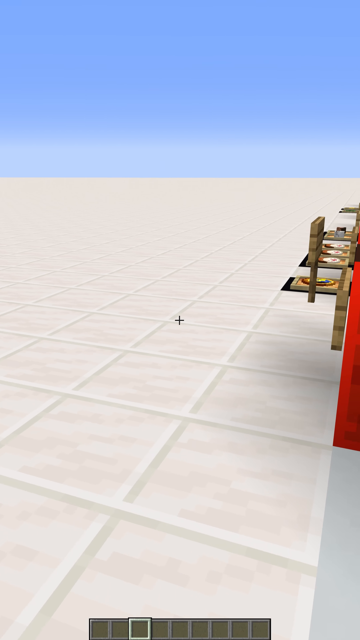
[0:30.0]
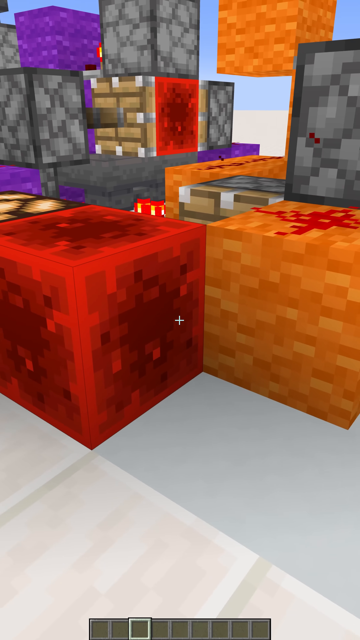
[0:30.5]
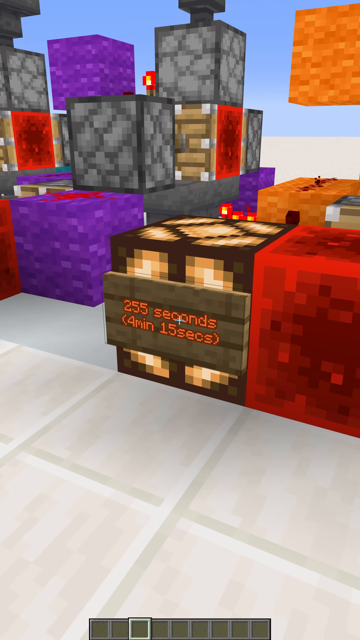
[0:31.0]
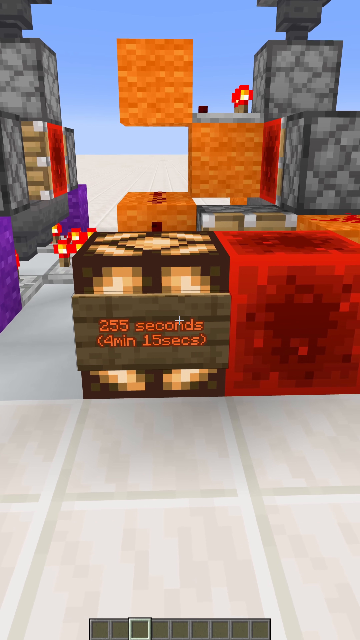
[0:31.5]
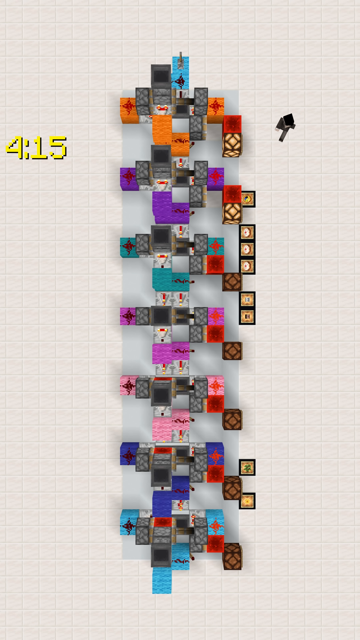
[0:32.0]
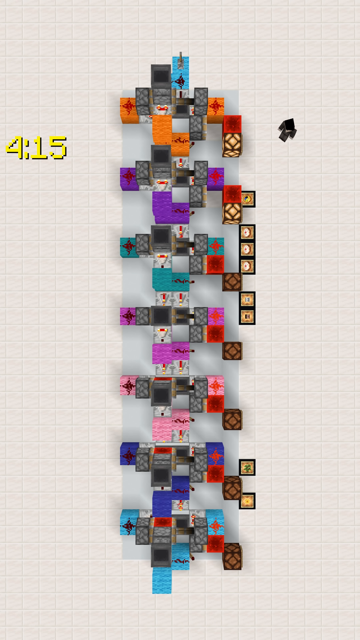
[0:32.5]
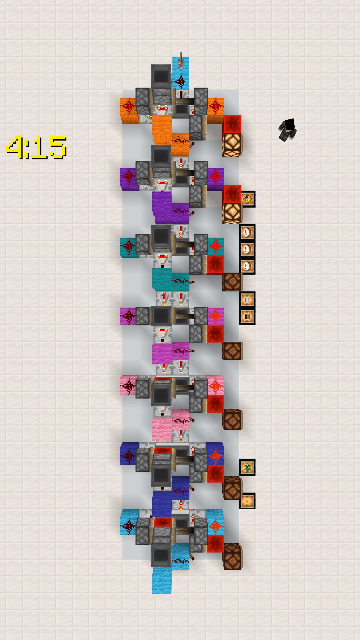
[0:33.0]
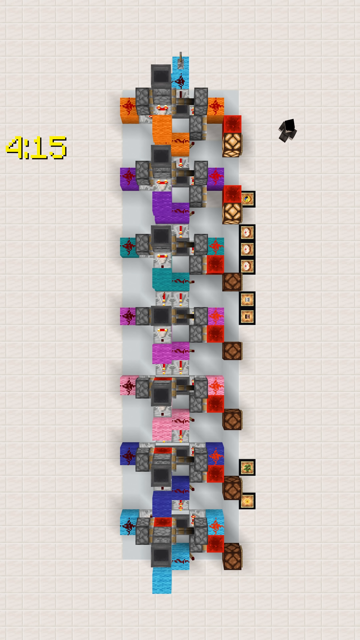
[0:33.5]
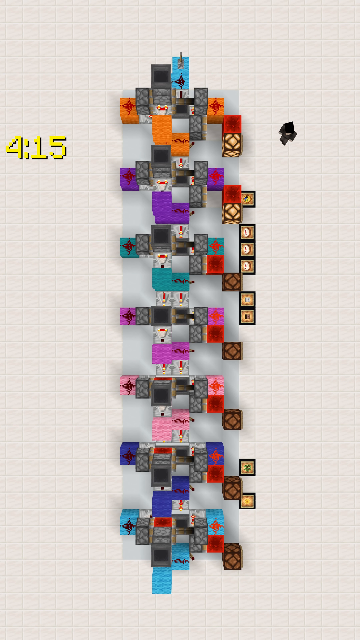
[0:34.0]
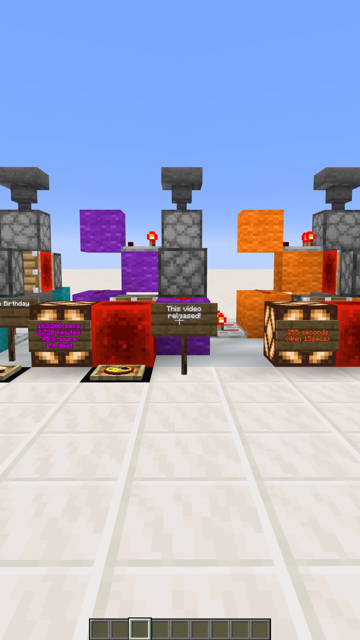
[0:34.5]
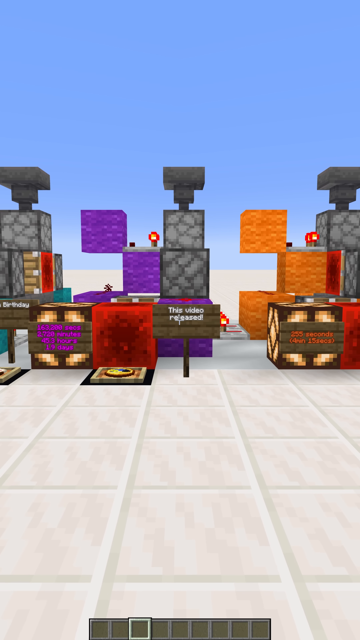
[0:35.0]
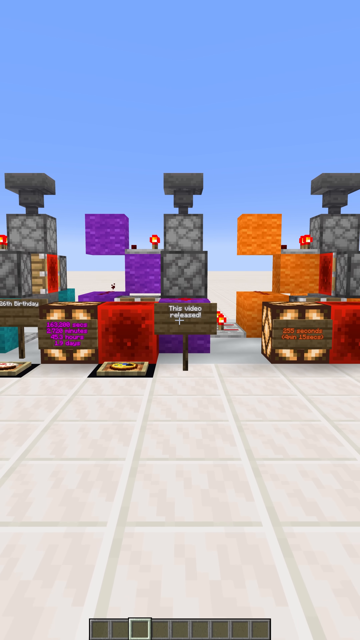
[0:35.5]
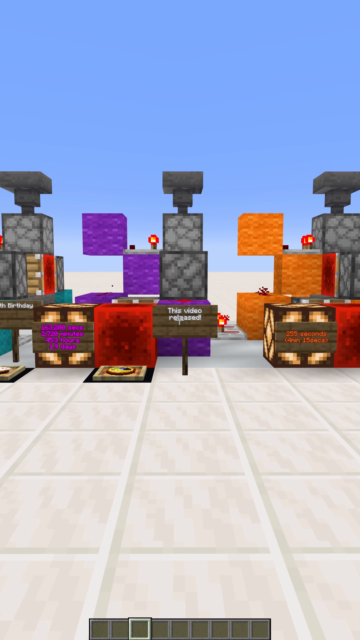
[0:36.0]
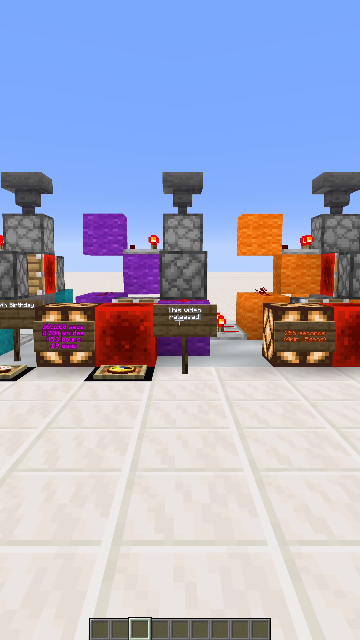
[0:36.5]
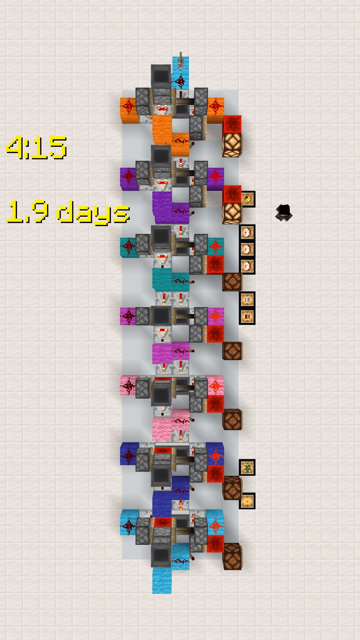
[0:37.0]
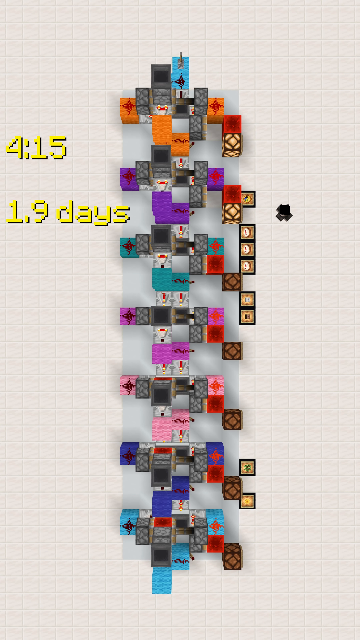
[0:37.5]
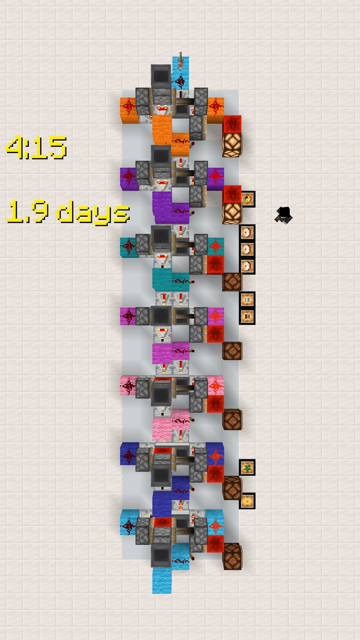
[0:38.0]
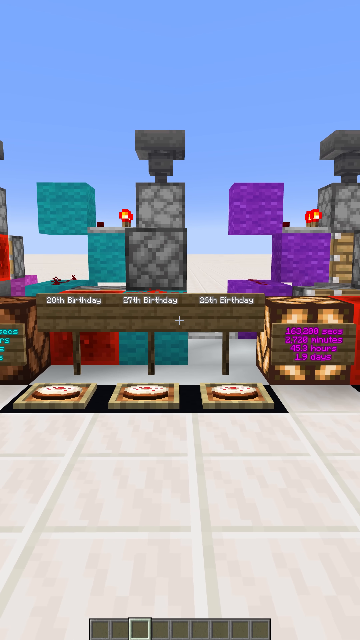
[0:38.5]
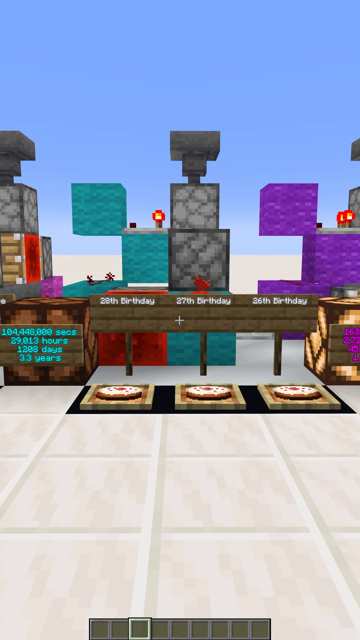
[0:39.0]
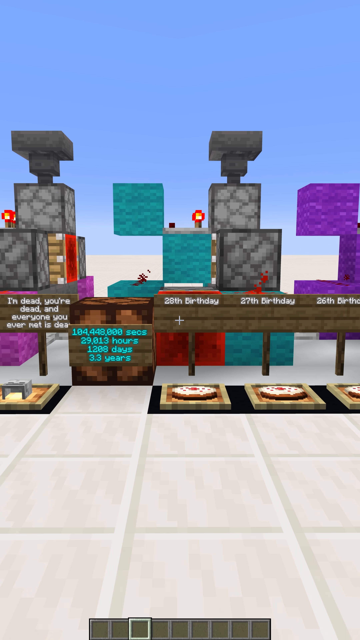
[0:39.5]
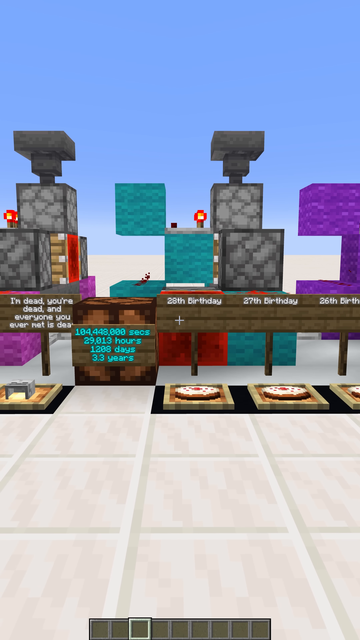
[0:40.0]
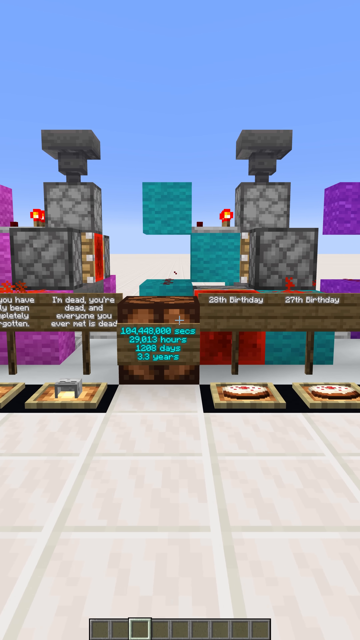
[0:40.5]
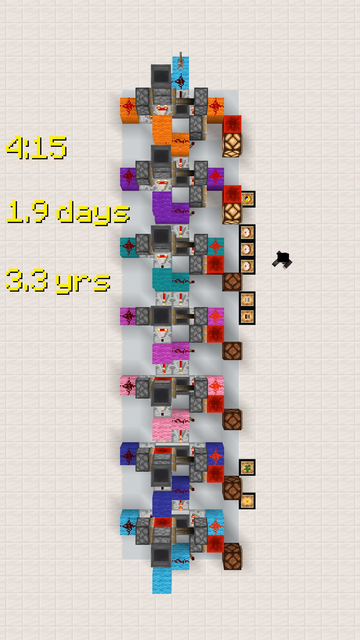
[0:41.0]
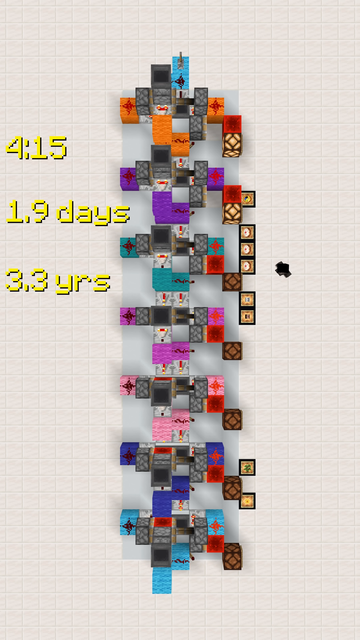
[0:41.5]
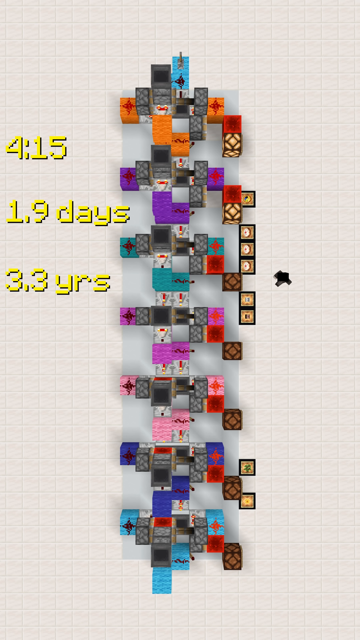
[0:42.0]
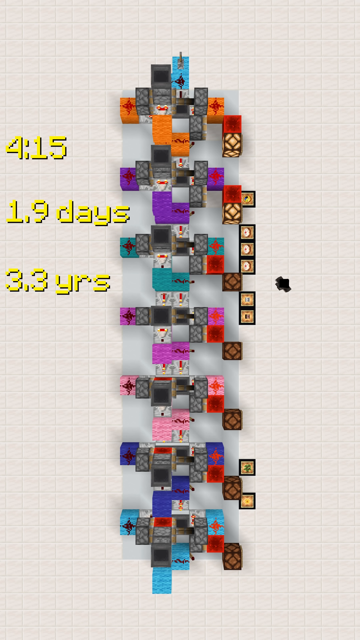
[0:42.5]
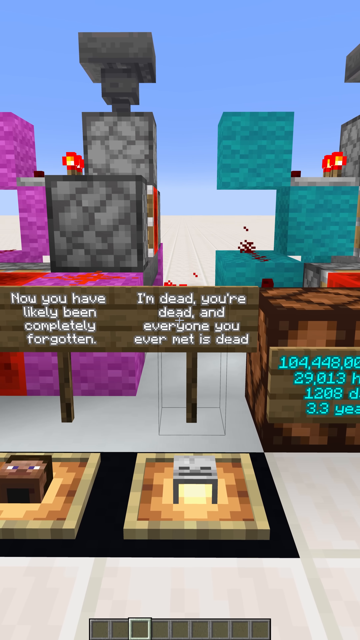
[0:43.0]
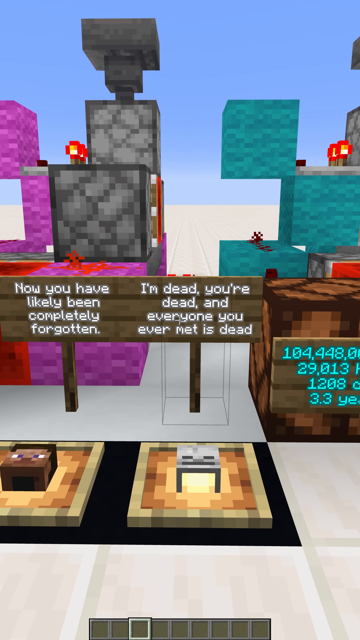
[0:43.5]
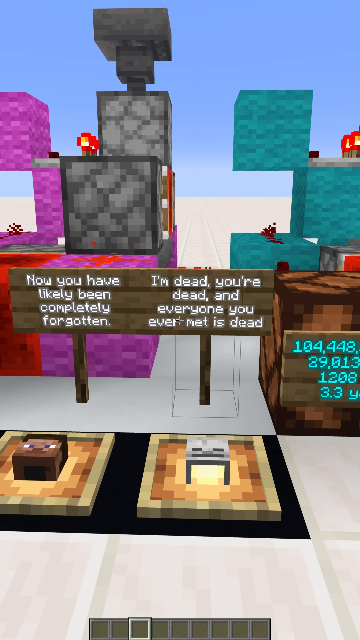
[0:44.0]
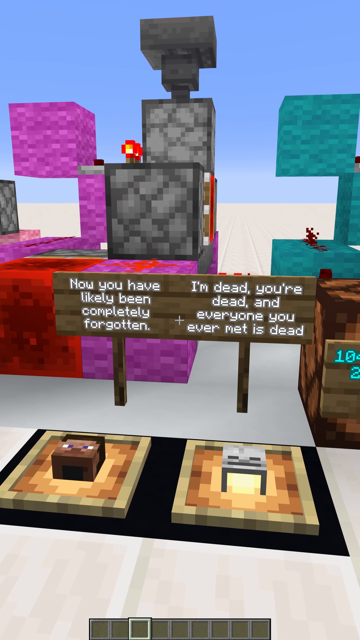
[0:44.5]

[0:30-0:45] The view is back down on the white tiles, like a bird's eye view, almost as if following in real time through the character's eyes as the view moves among the blocks for a bit. Then the view is overhead again, with the character on the right. The character seems to be making strategic moves, just steps, no longer running, almost as if being cautious. The view then appears to be the character's own, looking in toward the blocks from the outskirts; nothing appears to be happening. The blocks are seen from the side, showing how they are stacked and where there are spaces between them, apparently where the character could walk through or pick up blocks and place them where others are stacked. There are signs on the outside, apparently warnings. One appears to read "you're dead"; others say "now you have likely been completely forgotten" and "I'm dead, you're dead, and everyone you ever met is dead".